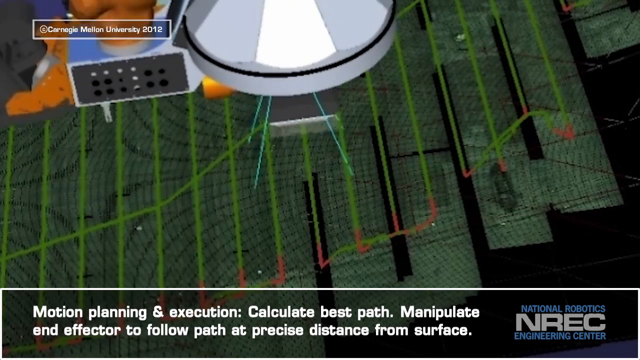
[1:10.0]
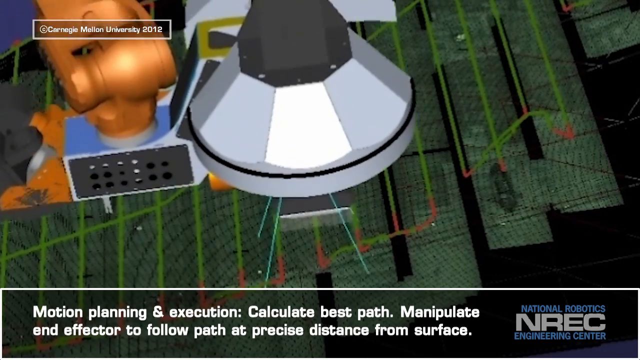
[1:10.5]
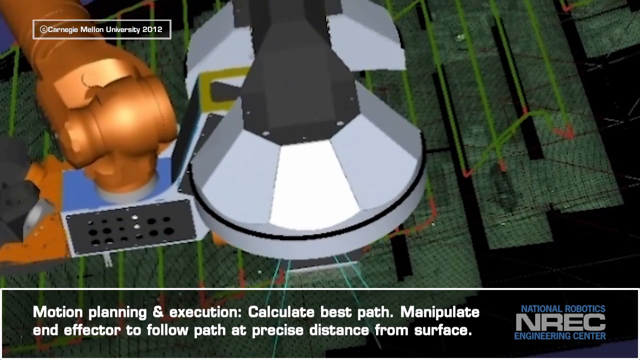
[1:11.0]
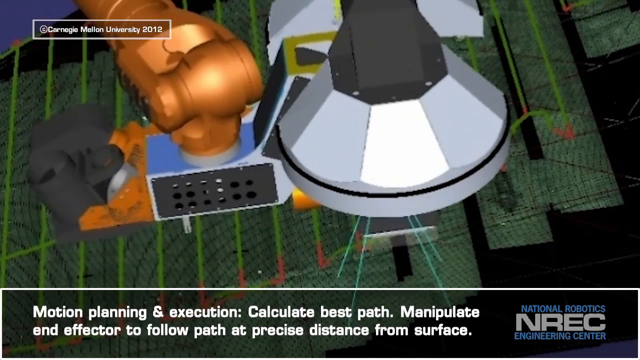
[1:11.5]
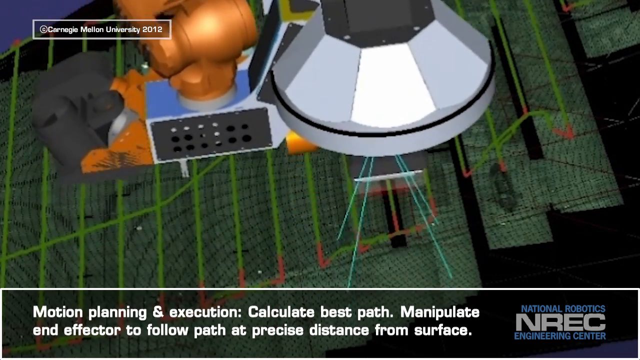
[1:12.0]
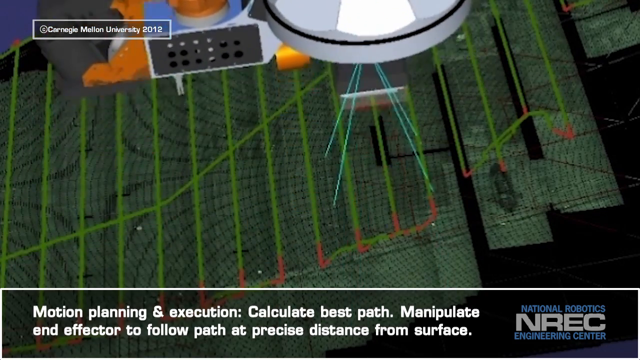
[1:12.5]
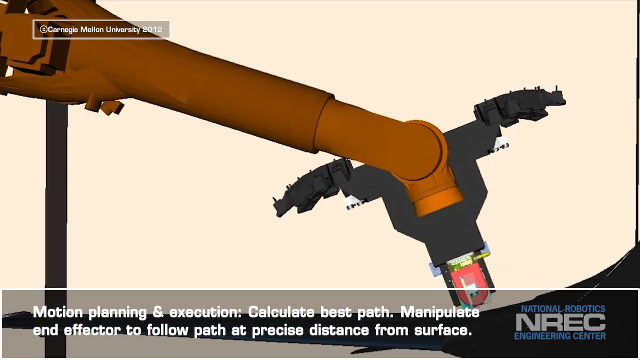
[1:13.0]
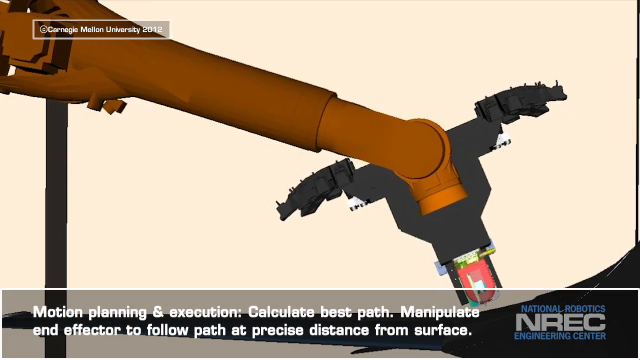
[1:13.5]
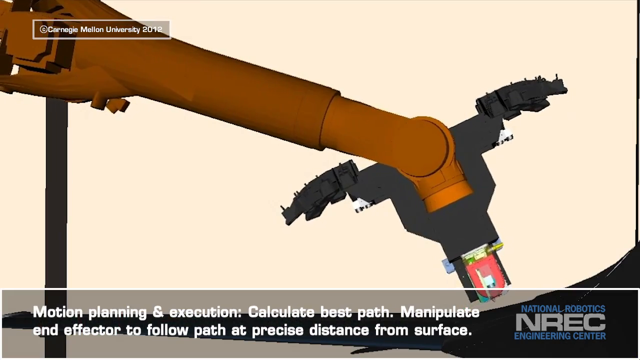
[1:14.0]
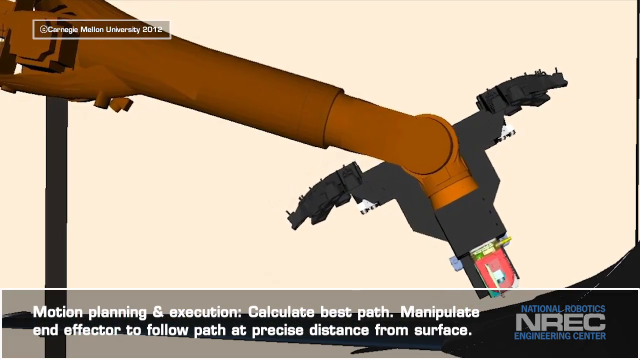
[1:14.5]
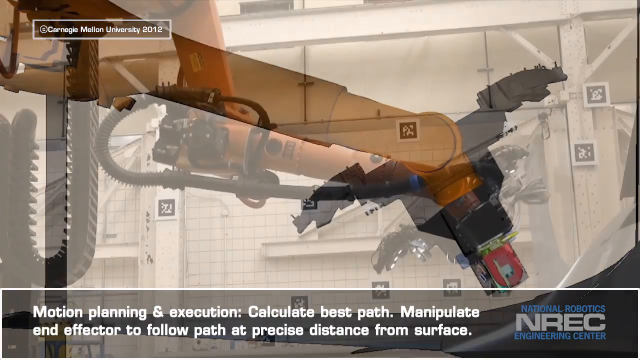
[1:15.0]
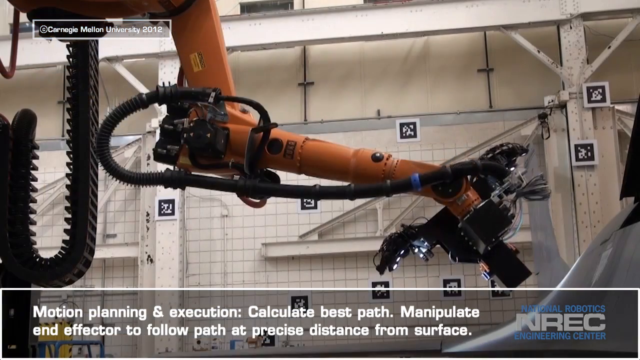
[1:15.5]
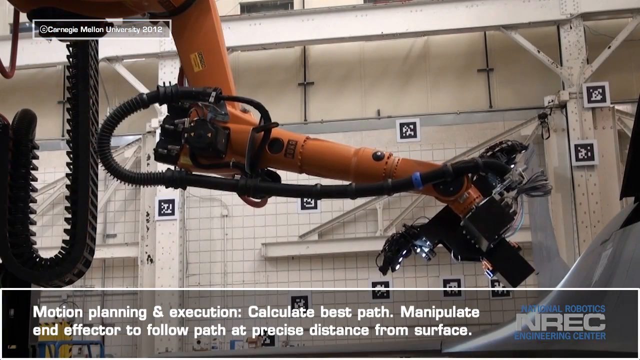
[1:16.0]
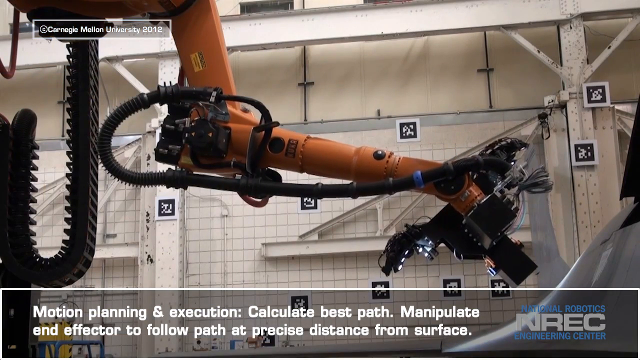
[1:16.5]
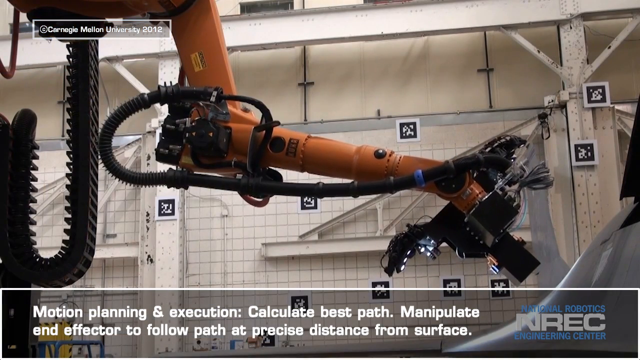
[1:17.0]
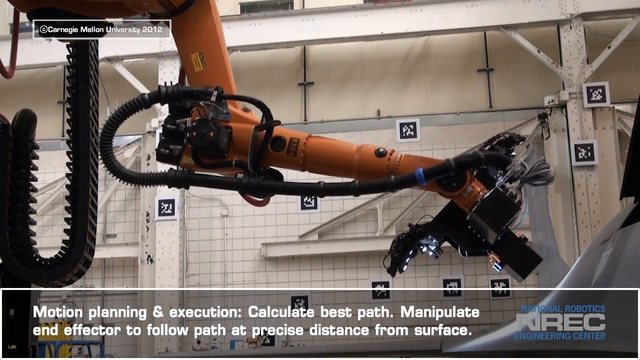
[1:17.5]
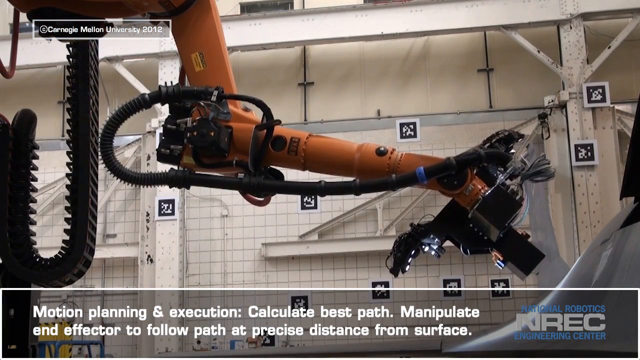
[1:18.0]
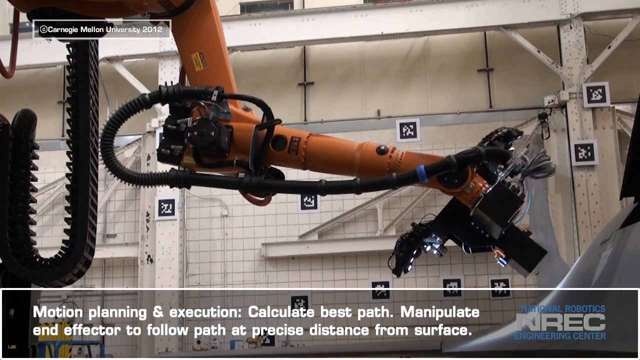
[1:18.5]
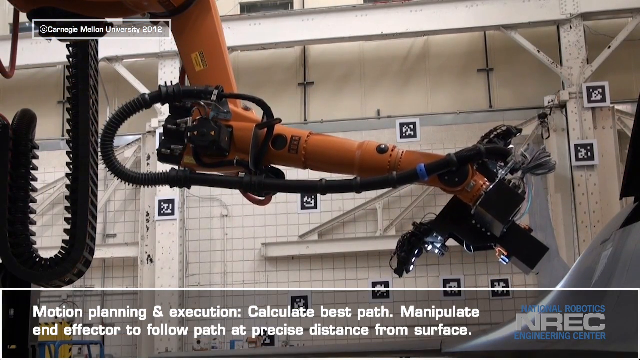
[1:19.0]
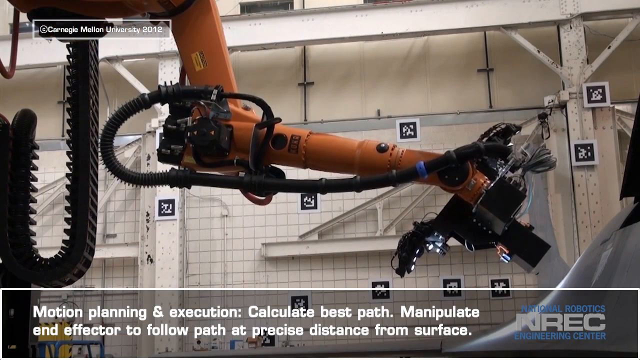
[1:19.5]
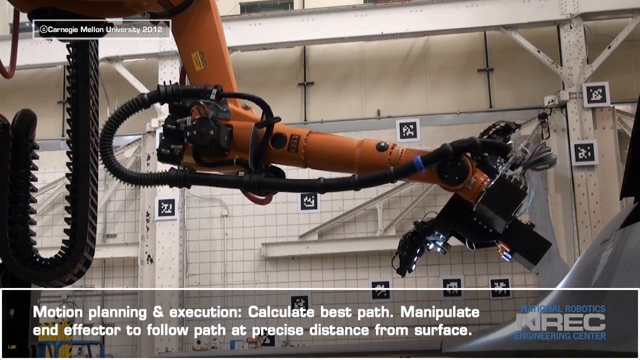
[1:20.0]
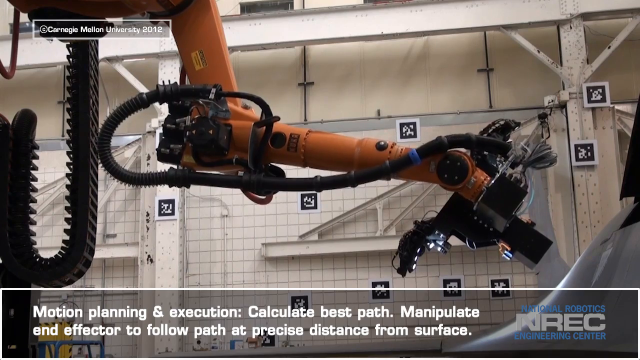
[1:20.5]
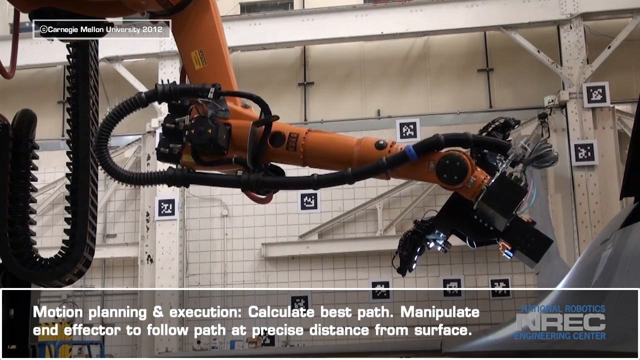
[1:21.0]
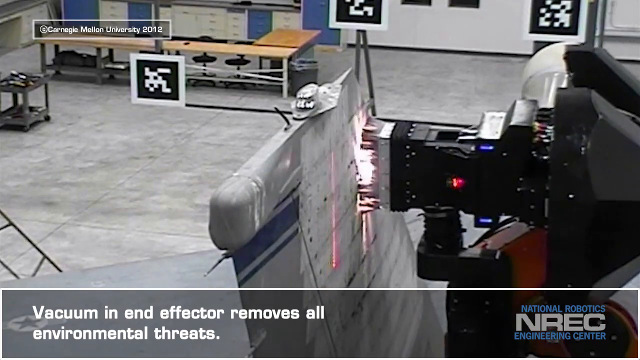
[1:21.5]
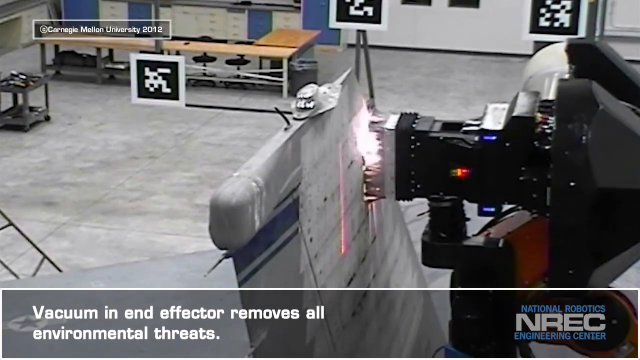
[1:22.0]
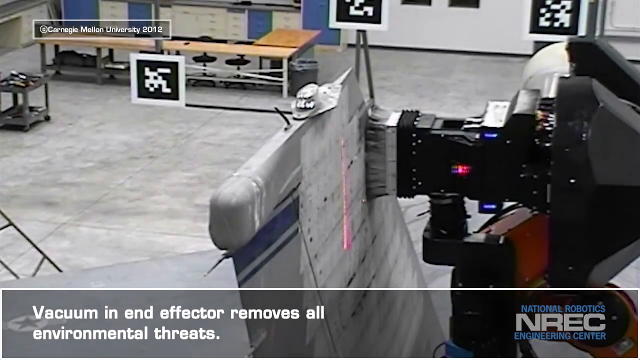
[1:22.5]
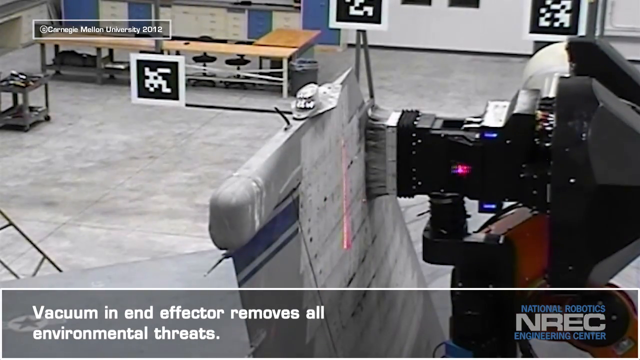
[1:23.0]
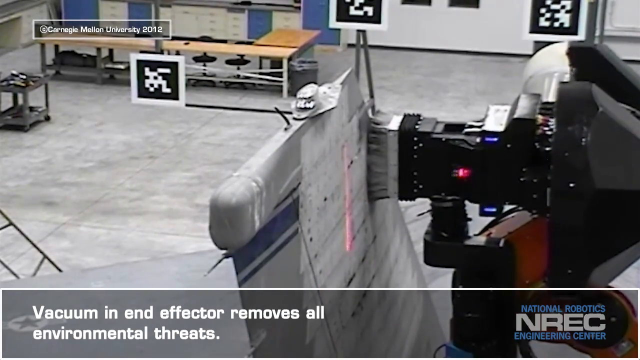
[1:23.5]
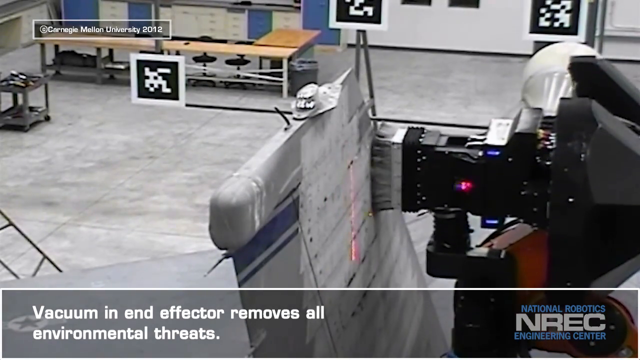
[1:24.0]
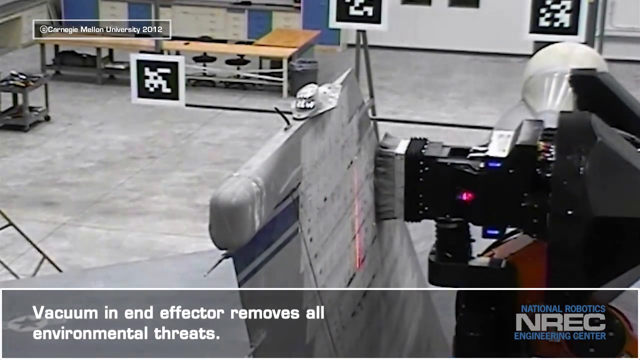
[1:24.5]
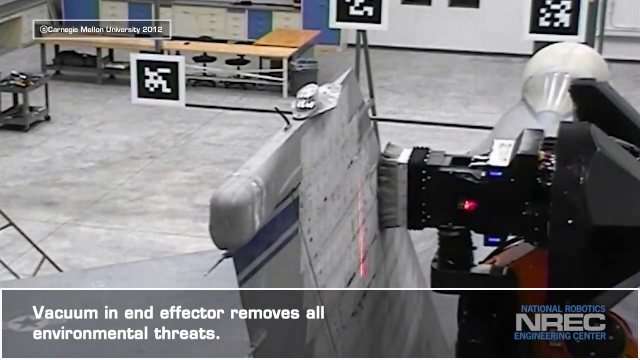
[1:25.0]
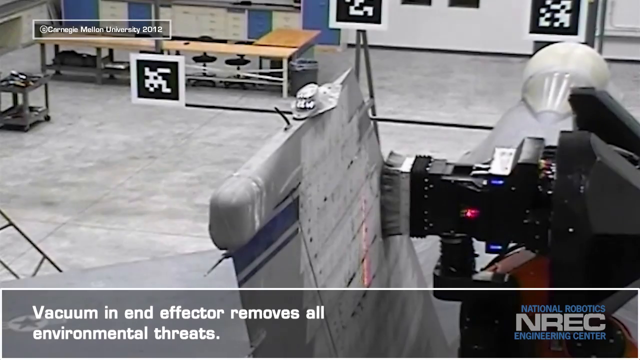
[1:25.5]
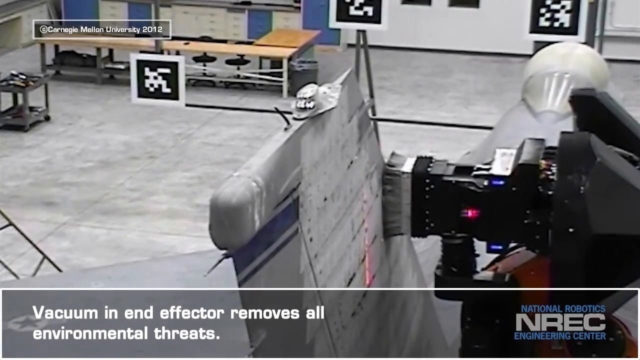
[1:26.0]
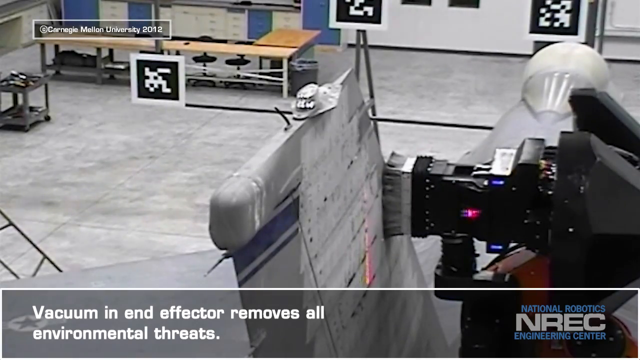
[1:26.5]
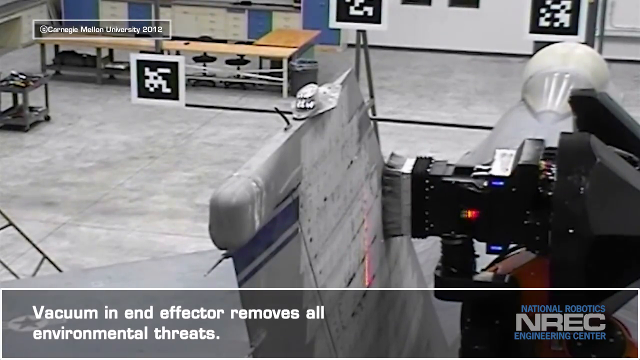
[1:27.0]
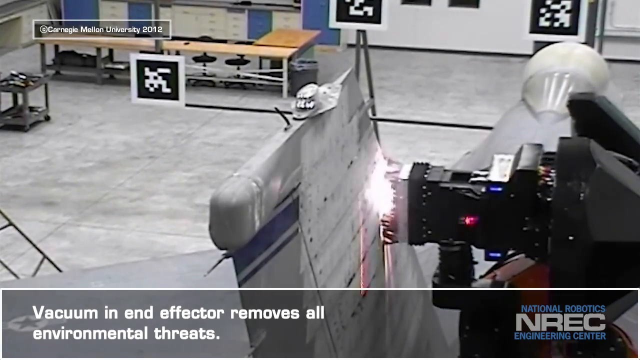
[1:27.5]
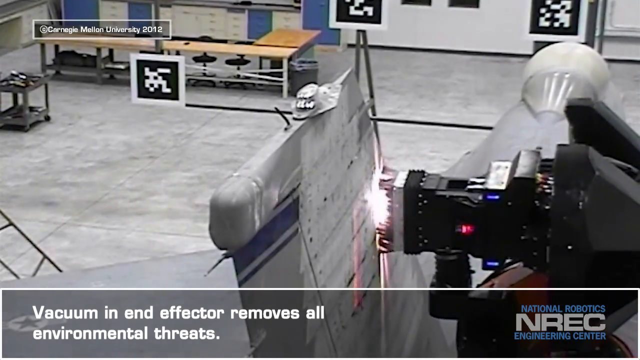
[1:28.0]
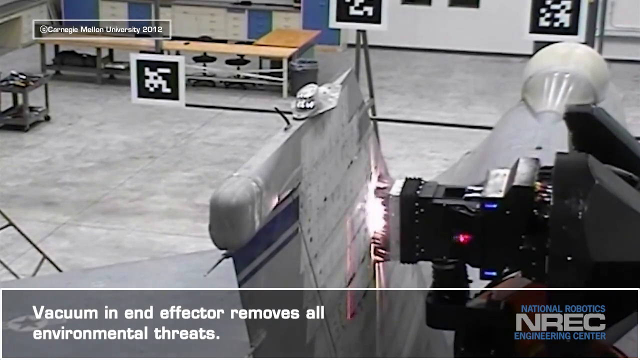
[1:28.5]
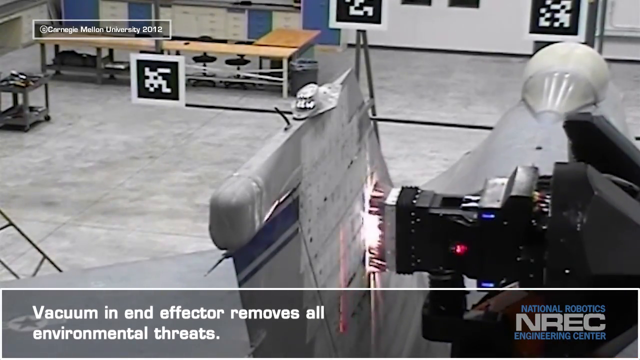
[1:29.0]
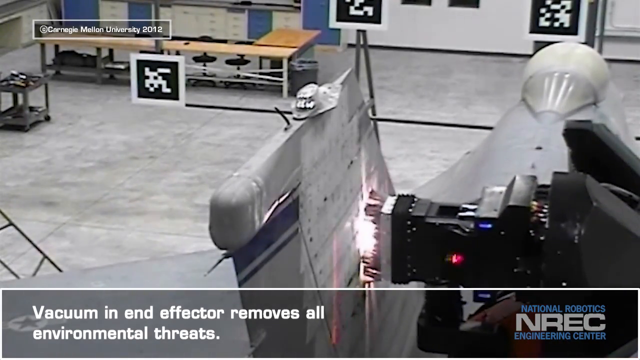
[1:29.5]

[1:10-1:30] The screen shows what is either virtual reality or some sort of simulation of how the robot works on the plane. An animation shows the machine doing motion planning and execution: calculating the best path, then manipulating the grid to get the precise distance to the surface. The orange robotic arm with a black tip performs maneuvers or restoration on the machine. Then a live picture shows the machine being operated in a warehouse; it appears to be about 20 feet long, in a scientific lab with tiled walls and a particularly clean environment. The bright white light of the laser does the restoration on what appears to be the top portion of the wing of the robotic plane pictured below.